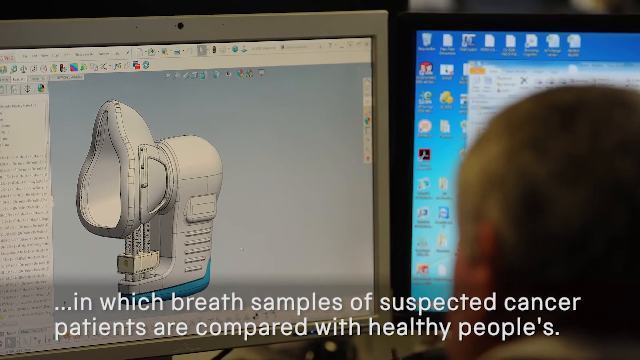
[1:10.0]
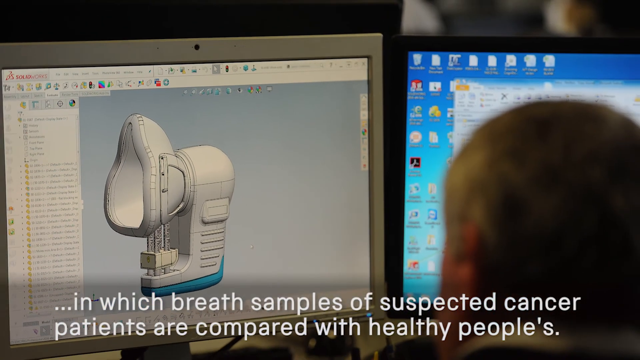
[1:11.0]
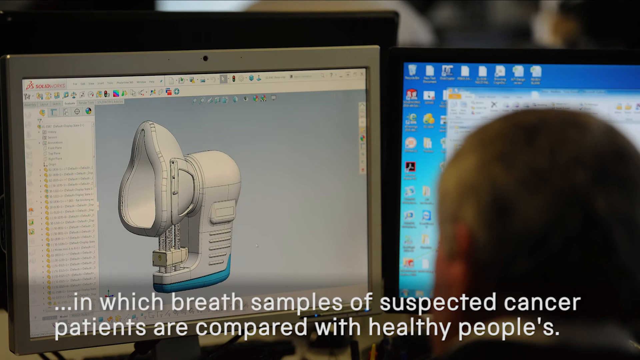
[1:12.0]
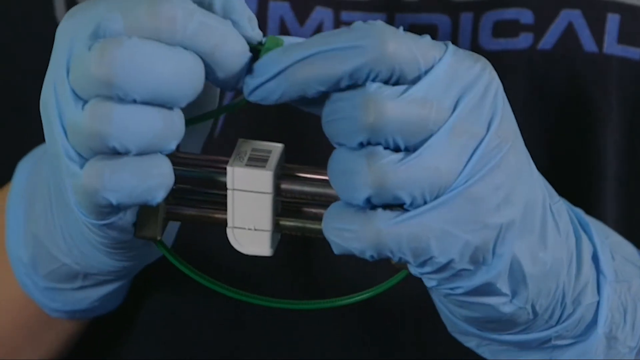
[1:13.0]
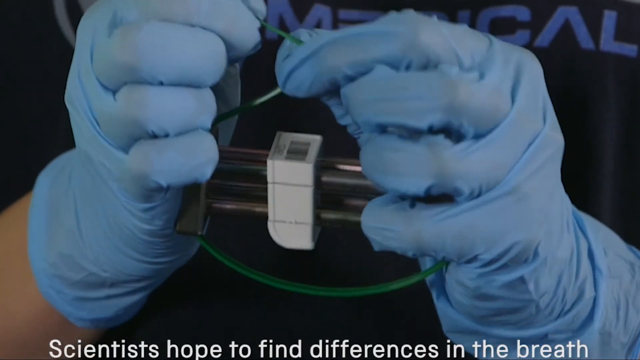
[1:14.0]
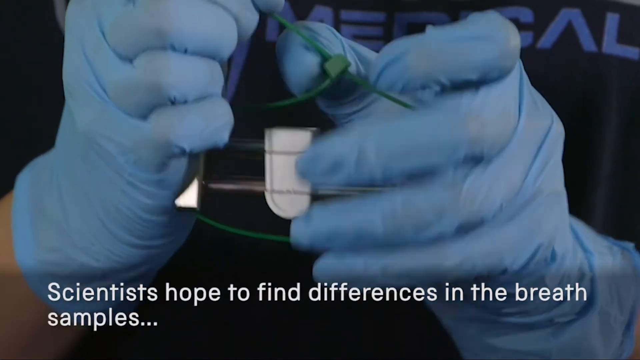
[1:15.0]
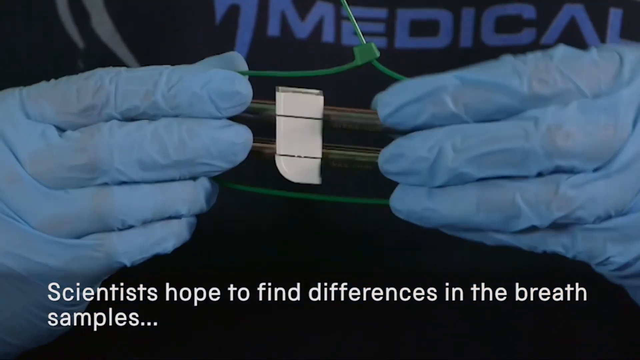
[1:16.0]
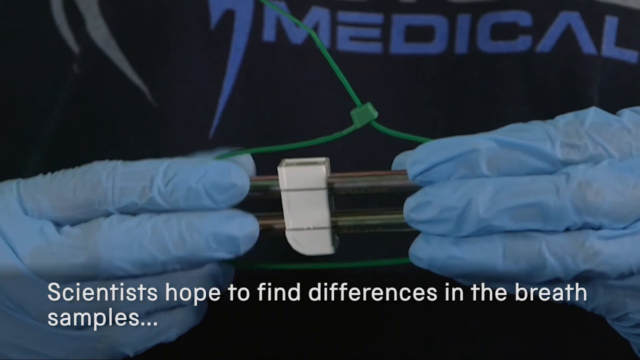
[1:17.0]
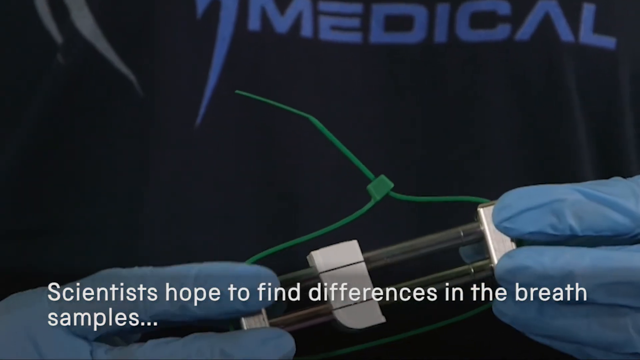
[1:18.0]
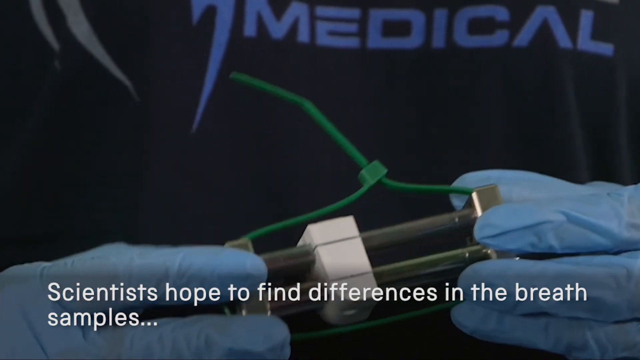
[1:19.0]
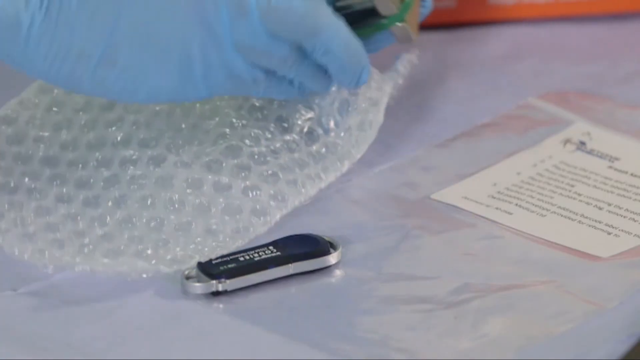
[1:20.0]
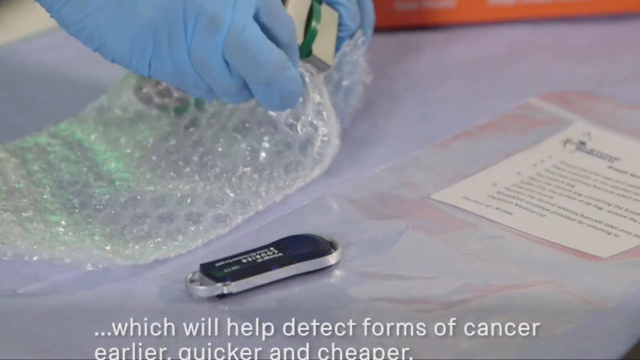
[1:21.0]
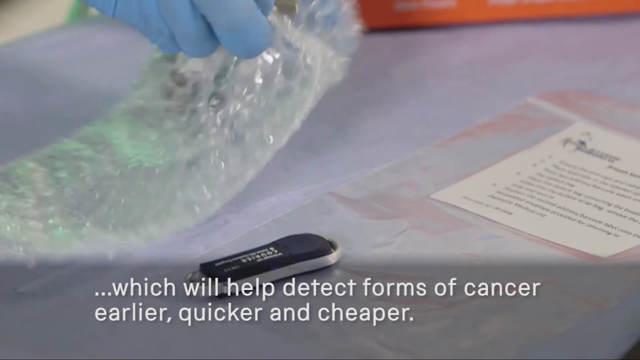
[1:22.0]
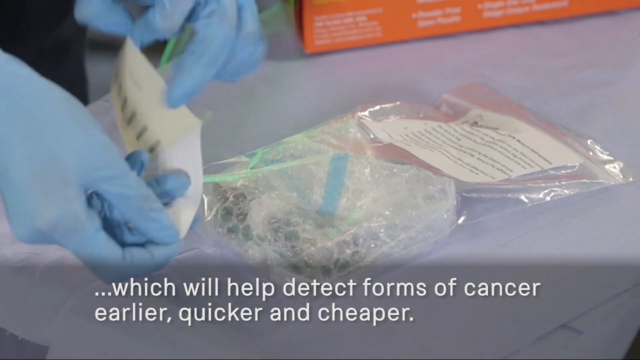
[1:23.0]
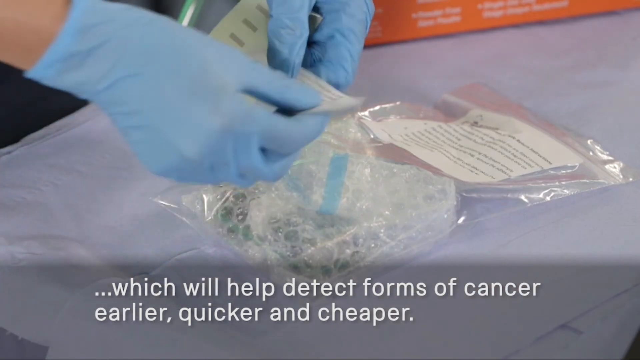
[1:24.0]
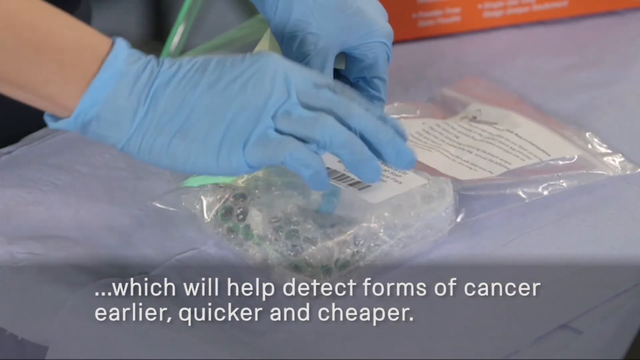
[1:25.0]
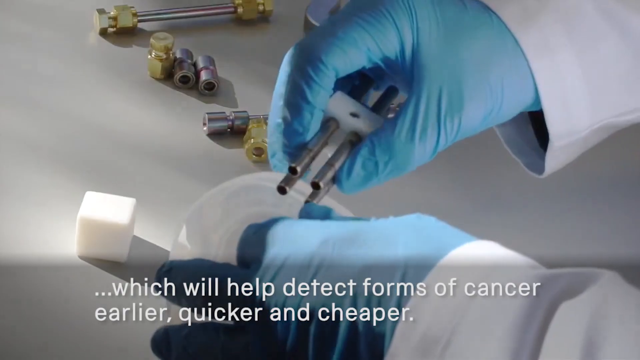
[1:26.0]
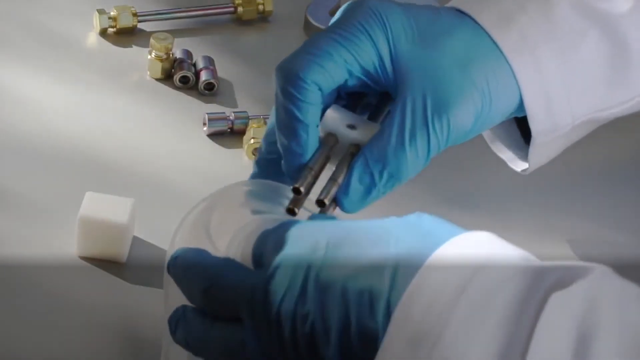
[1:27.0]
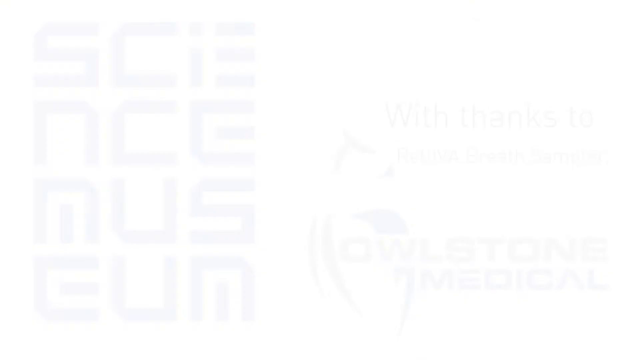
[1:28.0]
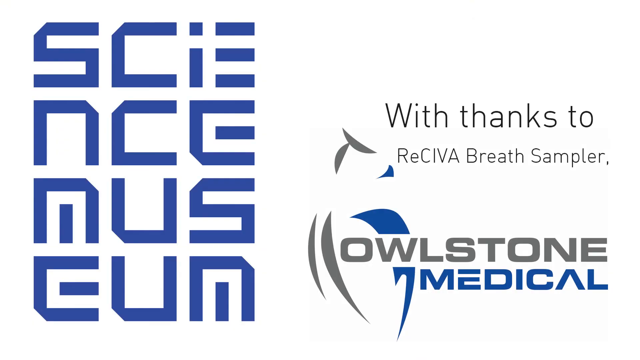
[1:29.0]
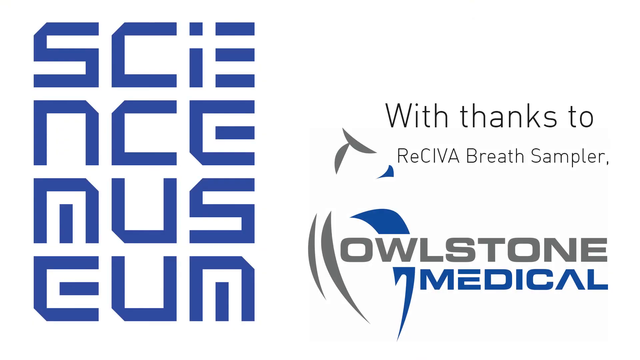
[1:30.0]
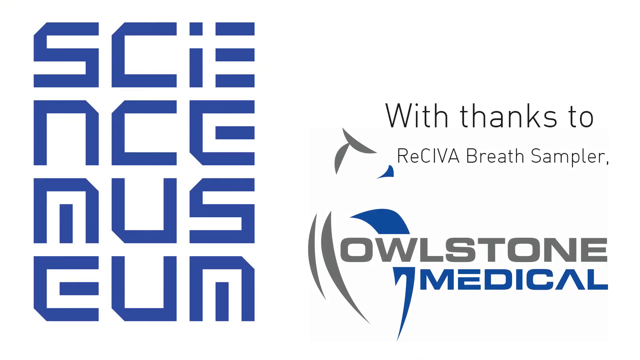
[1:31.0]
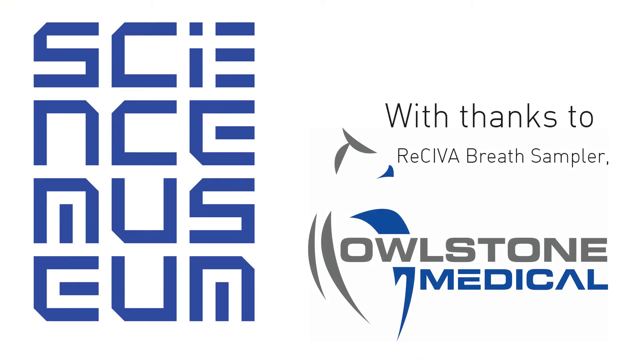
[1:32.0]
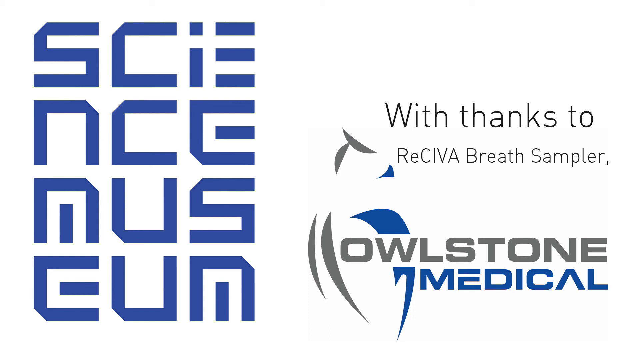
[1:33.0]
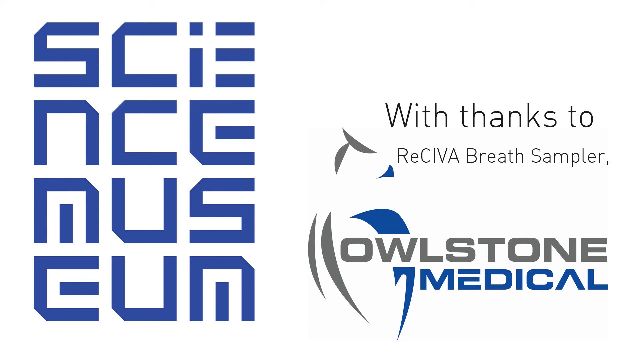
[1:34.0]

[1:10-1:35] The view looks over a technician's shoulder at two monitors. The left one shows the breath collection device, apparently in CAD software, and the right one is a Windows desktop with perhaps one or two administrative windows open. A technician wearing blue latex gloves then unties a green wire loop that holds two small cylinders, maybe four inches by one inch, clipped together in the device; these are possibly the cylinders that store material collected from the breath for later analysis. After untying it, he puts it in some bubble wrap, and it looks like he is going to mail it somewhere.